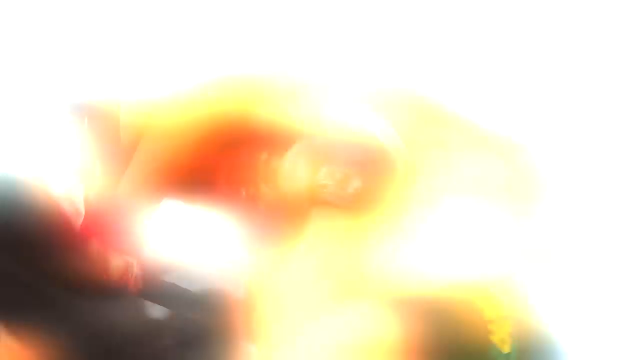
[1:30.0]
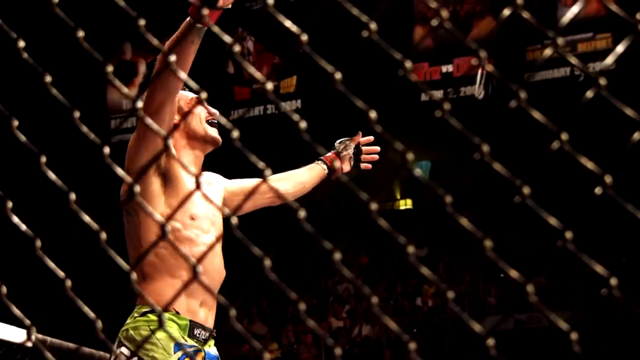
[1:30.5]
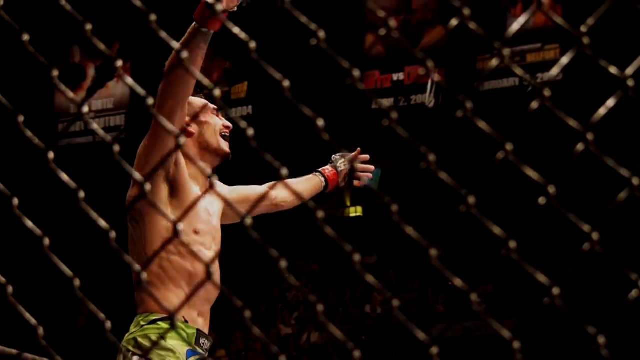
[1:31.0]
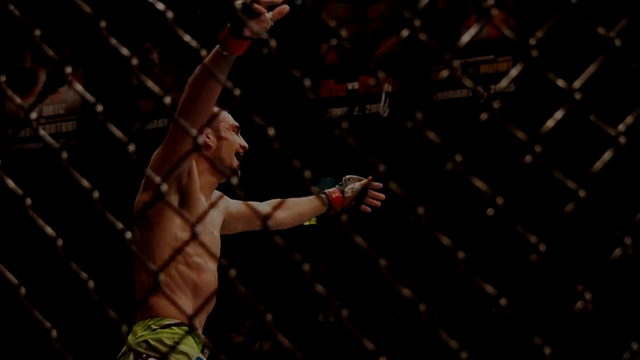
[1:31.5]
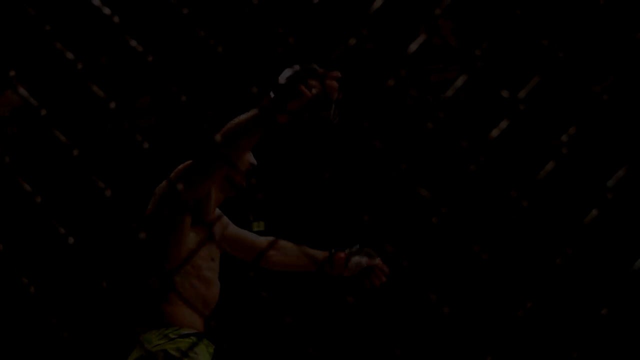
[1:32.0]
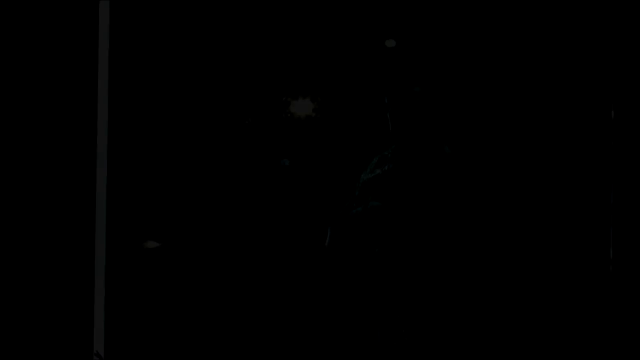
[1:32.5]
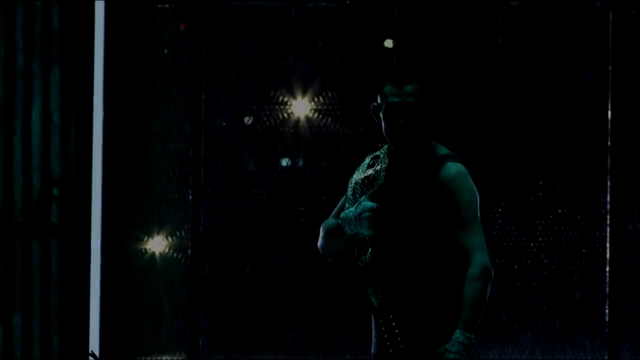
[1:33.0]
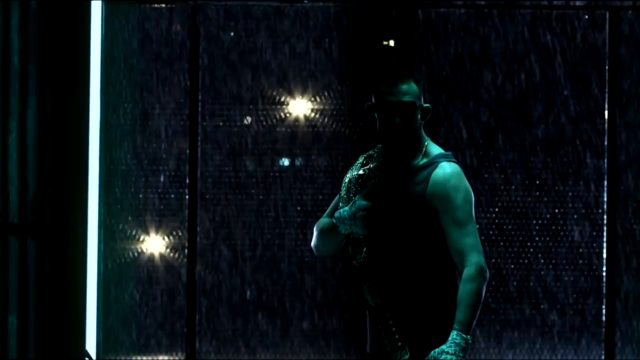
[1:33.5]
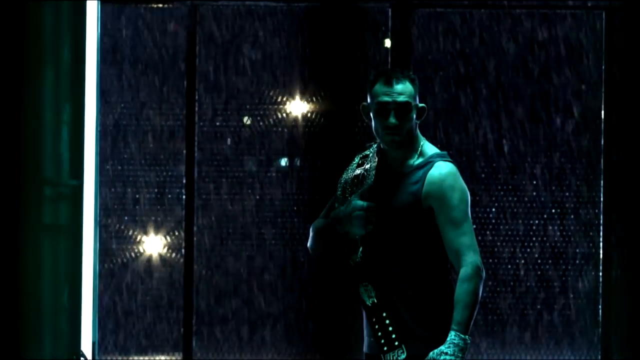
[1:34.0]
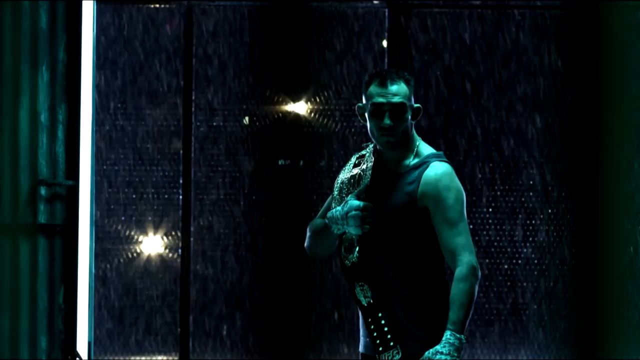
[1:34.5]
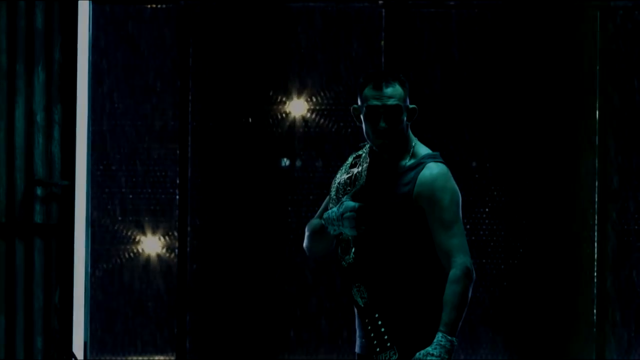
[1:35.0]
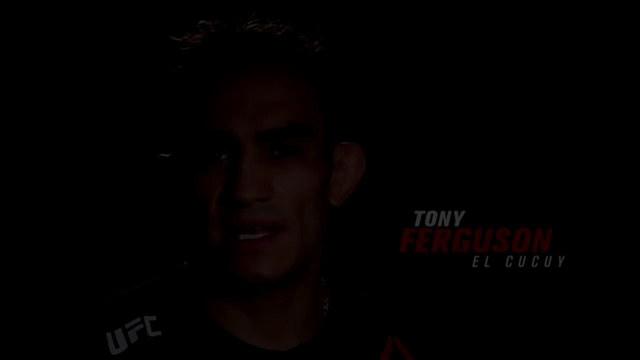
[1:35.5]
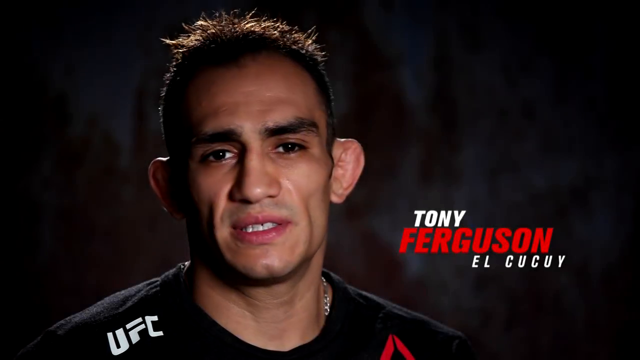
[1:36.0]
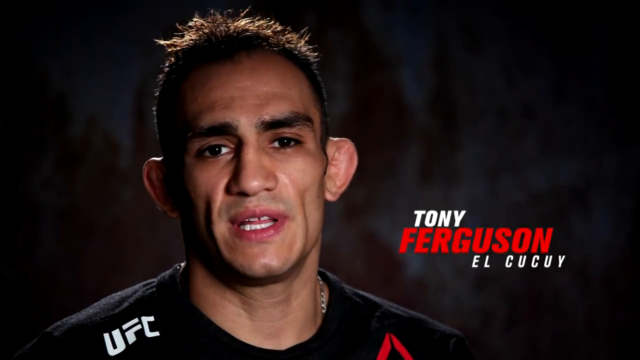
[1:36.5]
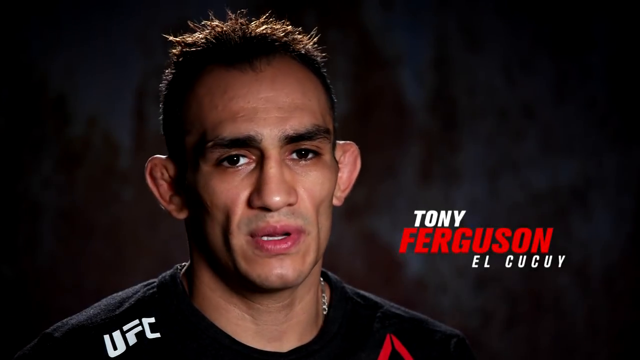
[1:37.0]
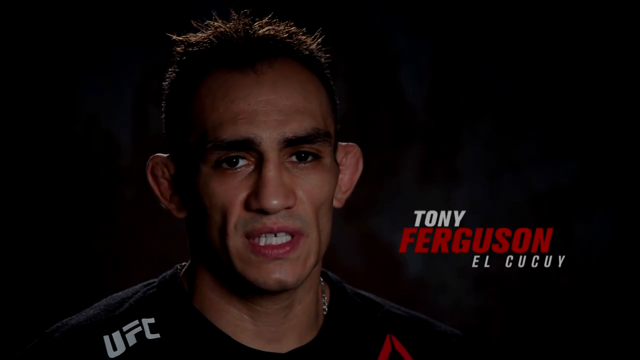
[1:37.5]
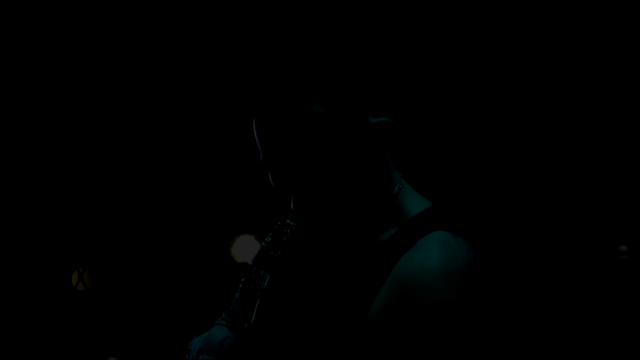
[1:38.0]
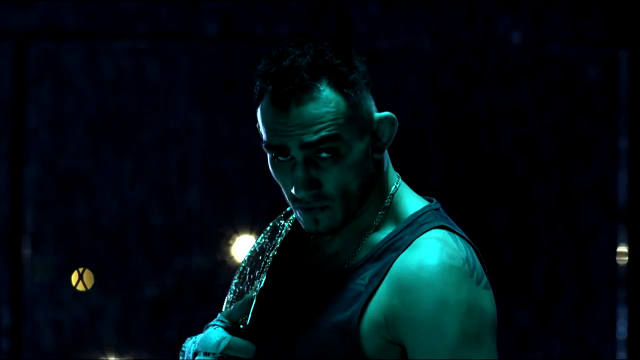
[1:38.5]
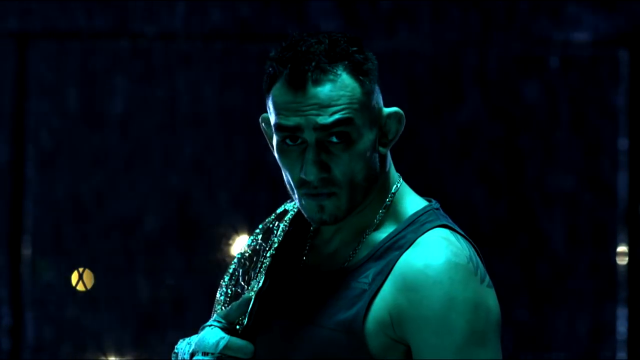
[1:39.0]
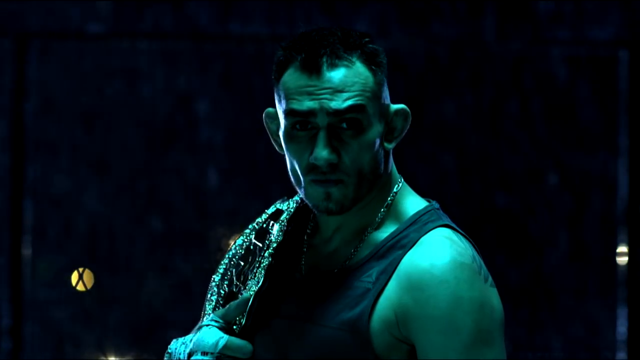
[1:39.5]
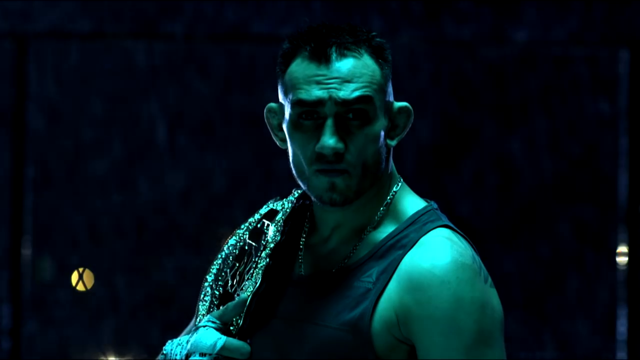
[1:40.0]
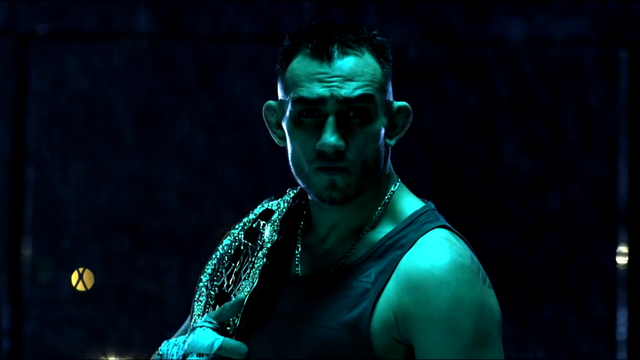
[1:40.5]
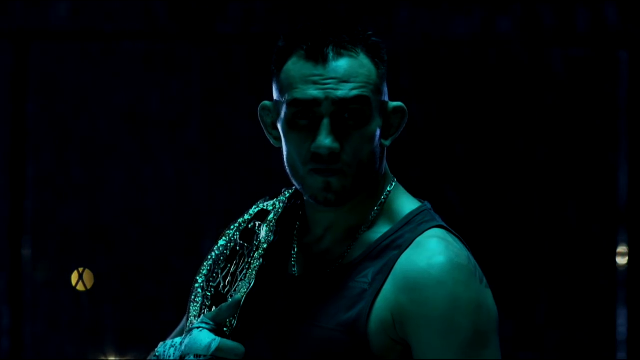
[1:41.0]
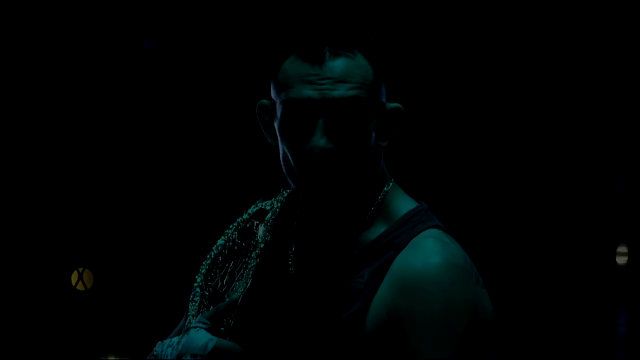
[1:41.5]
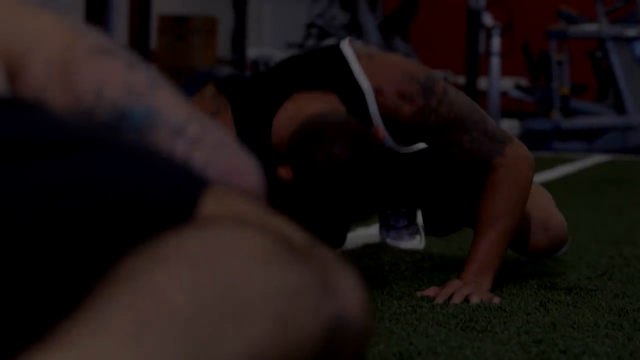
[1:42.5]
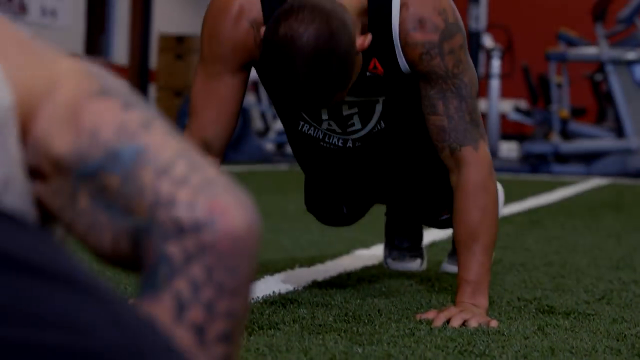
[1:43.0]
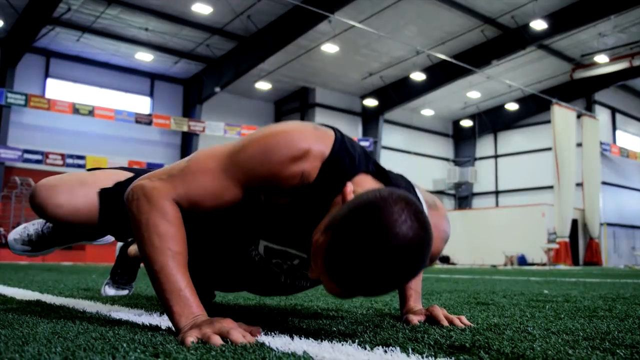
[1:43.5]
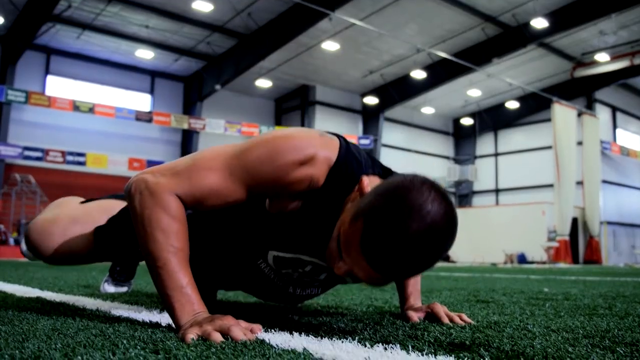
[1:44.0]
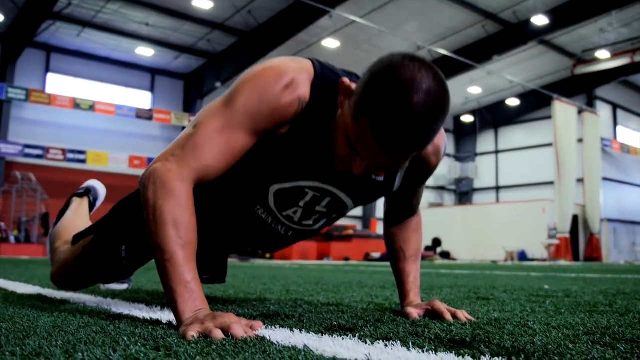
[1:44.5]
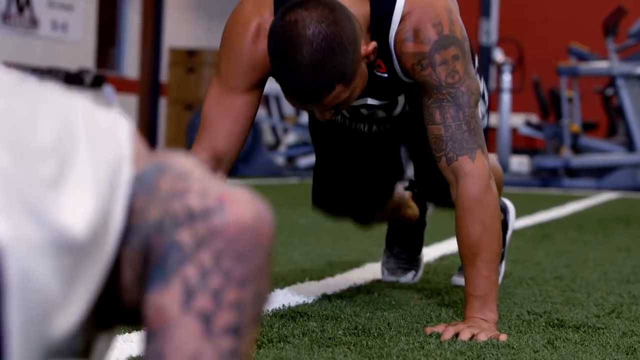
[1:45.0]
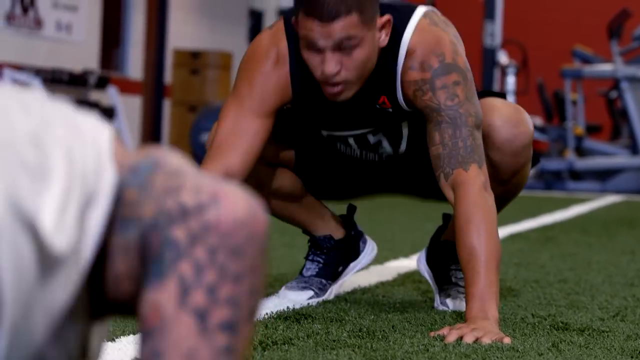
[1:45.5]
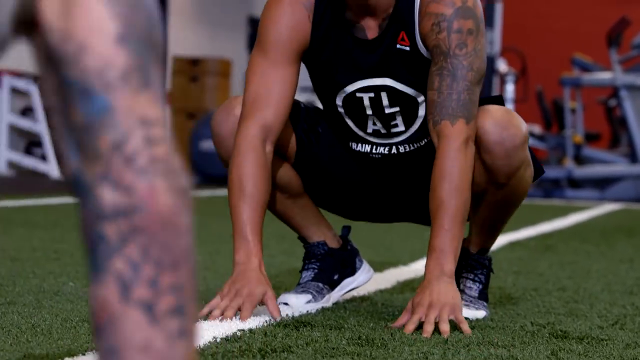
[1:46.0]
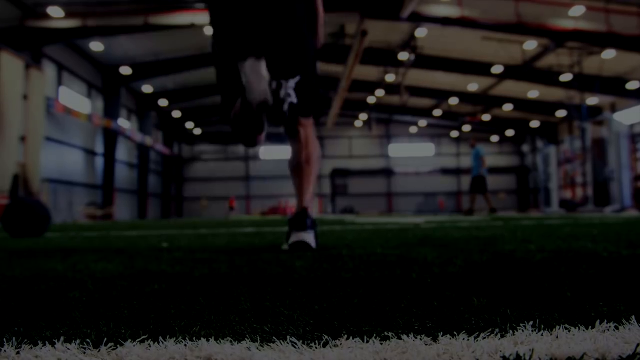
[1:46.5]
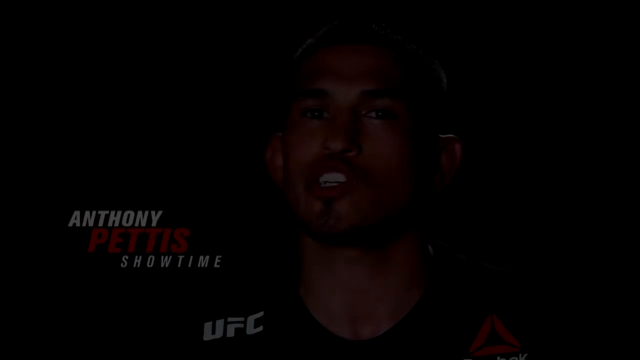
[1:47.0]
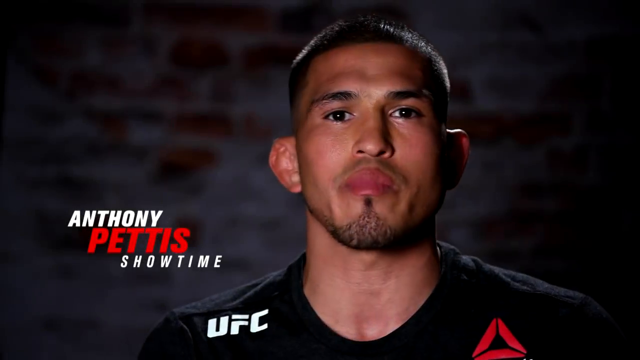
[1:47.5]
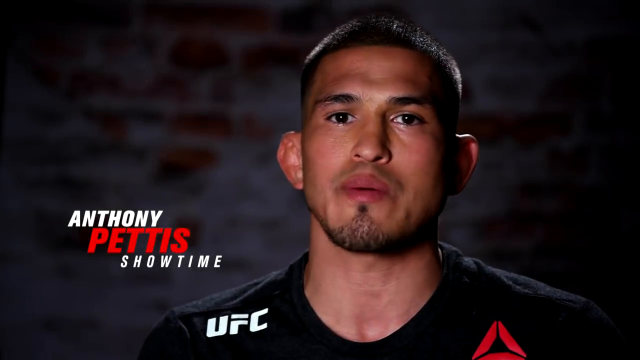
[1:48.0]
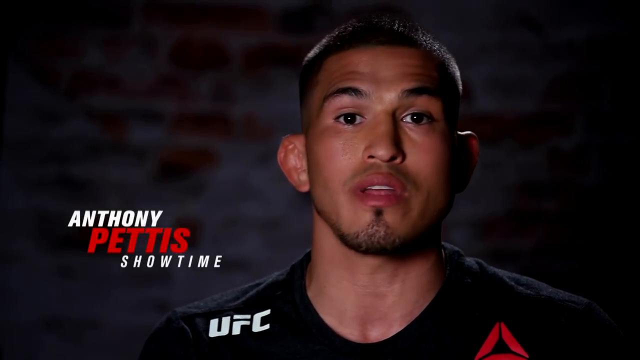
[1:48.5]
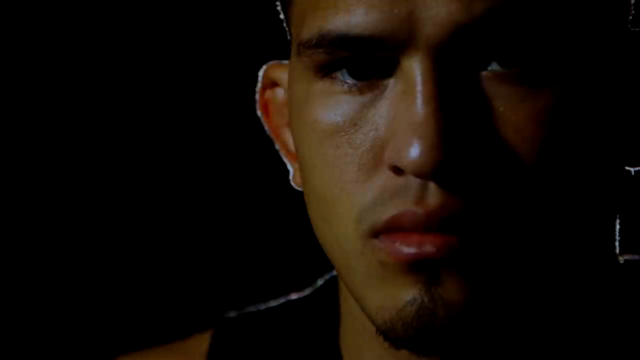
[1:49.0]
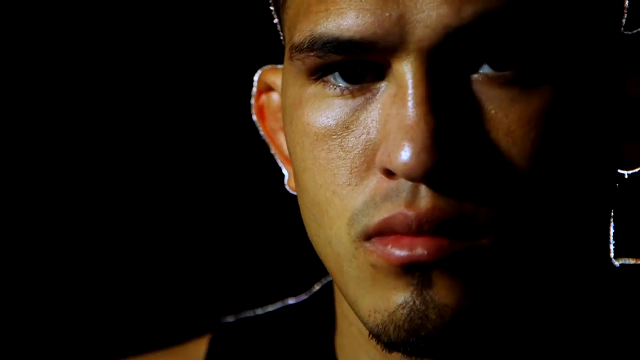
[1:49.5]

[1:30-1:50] A man who maybe looks Latino, with brown hair, talks while looking forward at the camera, and the text "Anthony Petits" appears. The video then shows someone cheering in the ring, followed by another man who also looks Latino, with kind of balding black hair and a black tank top, talking to the camera; the text gives his name as "Tony Ferguson". Both are UFC fighters. The same man is shown doing push-ups and running. The promotional footage shows the fighters standing around looking tough, giving interviews, doing push-ups and running around looking active and fit.